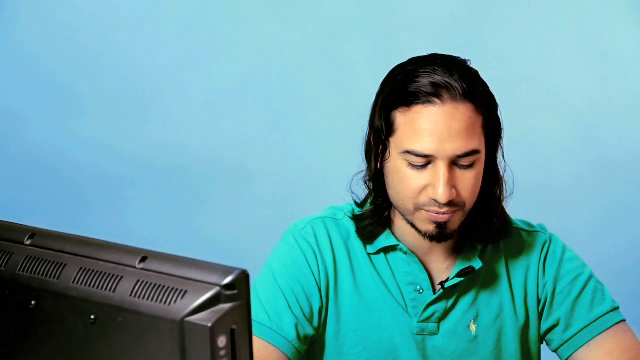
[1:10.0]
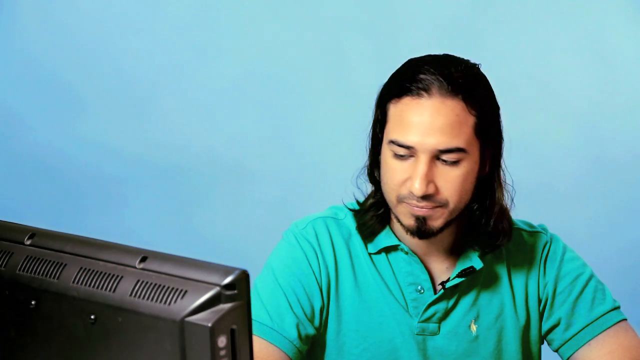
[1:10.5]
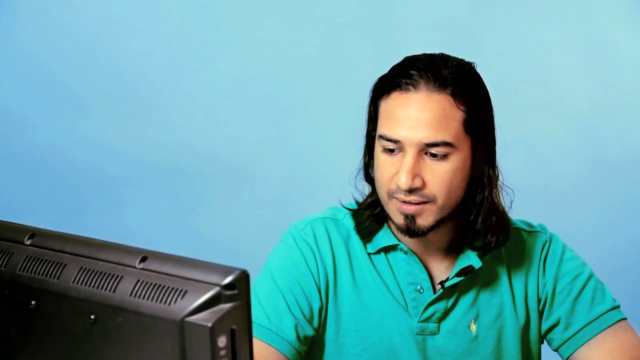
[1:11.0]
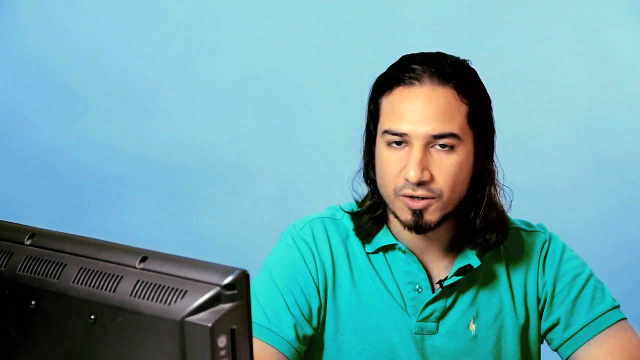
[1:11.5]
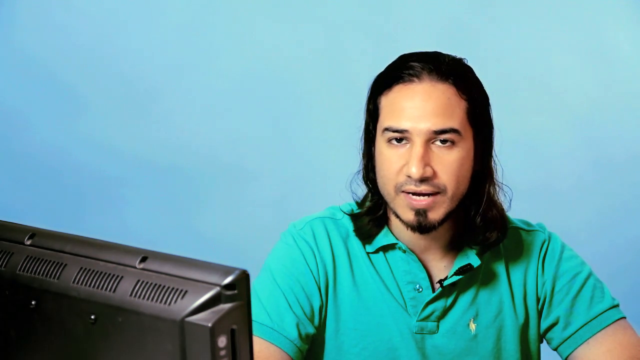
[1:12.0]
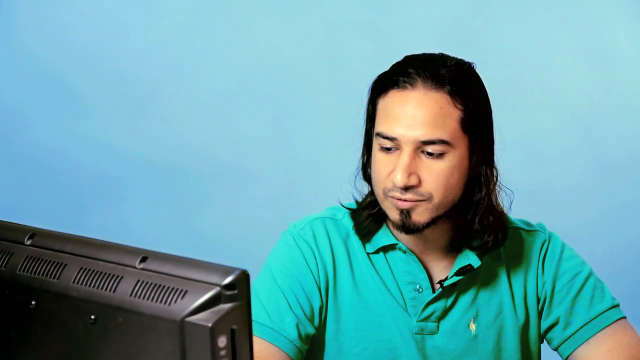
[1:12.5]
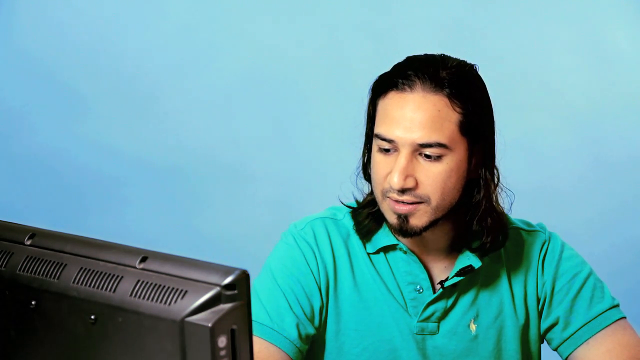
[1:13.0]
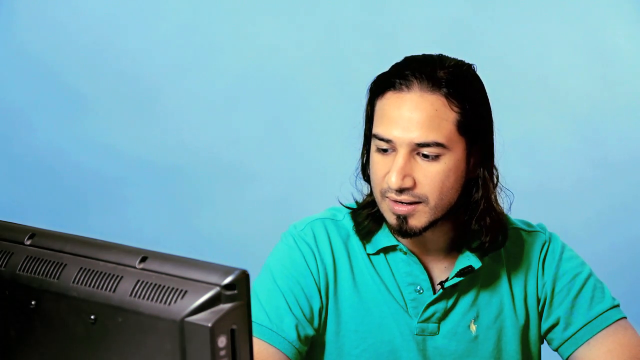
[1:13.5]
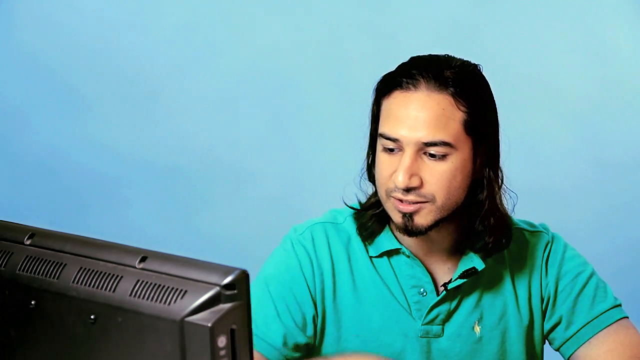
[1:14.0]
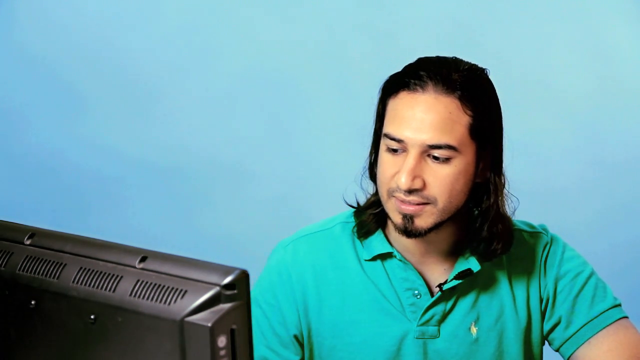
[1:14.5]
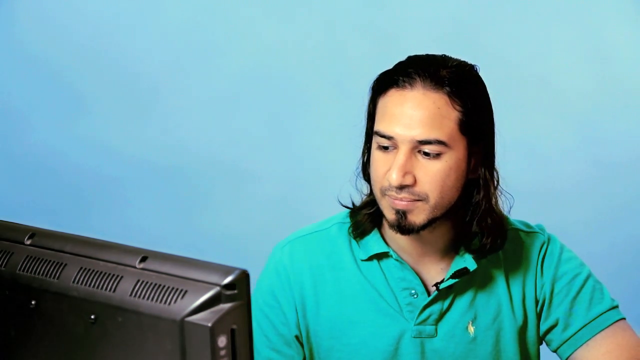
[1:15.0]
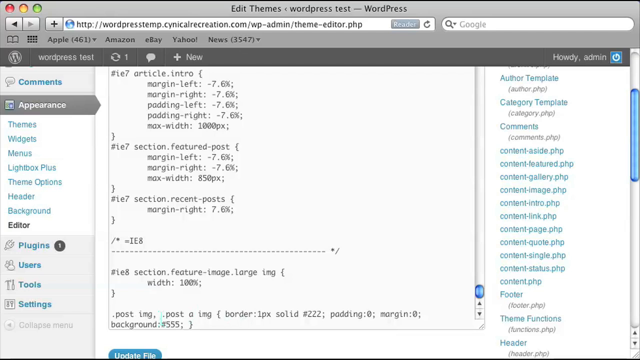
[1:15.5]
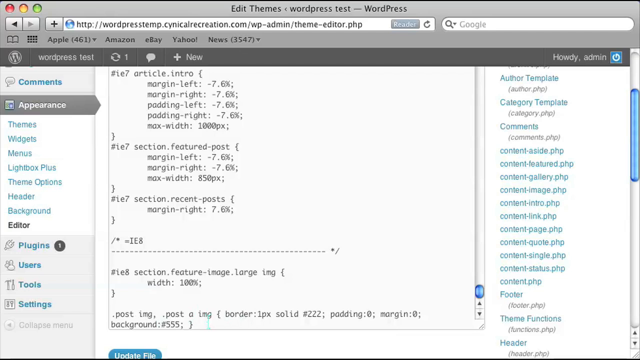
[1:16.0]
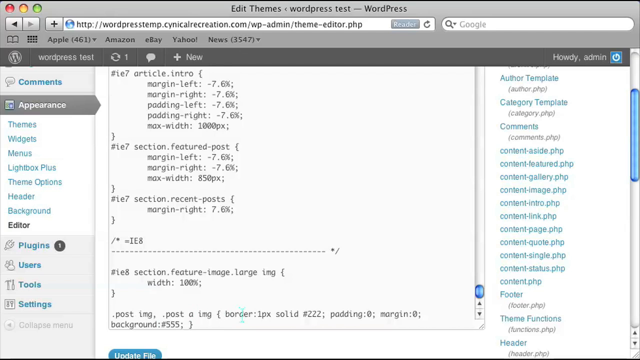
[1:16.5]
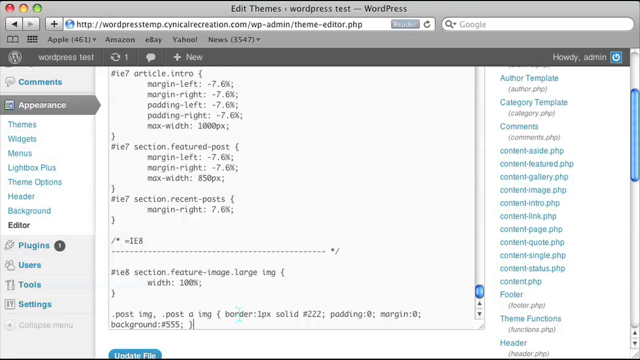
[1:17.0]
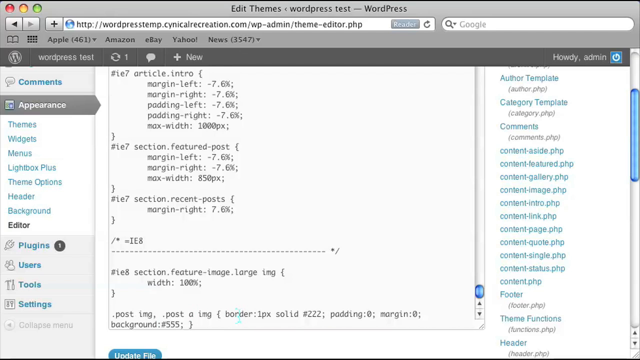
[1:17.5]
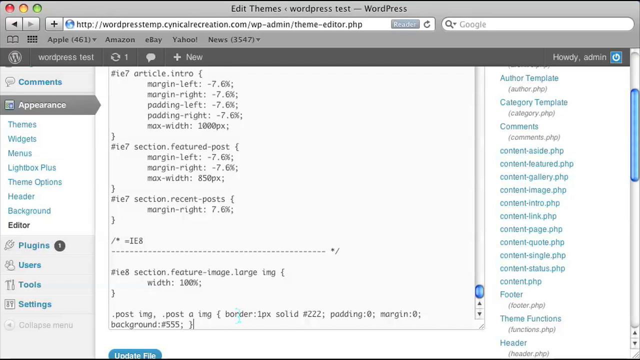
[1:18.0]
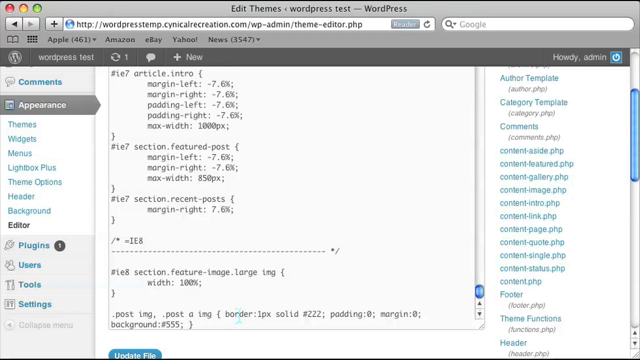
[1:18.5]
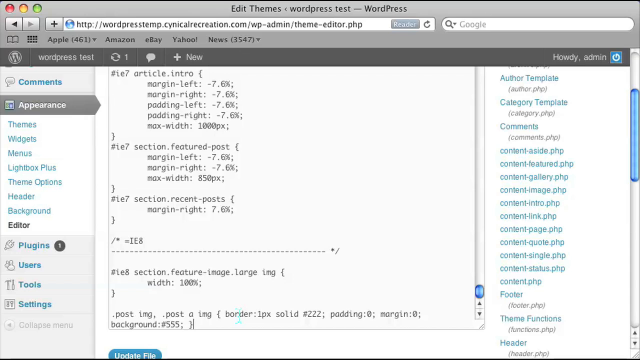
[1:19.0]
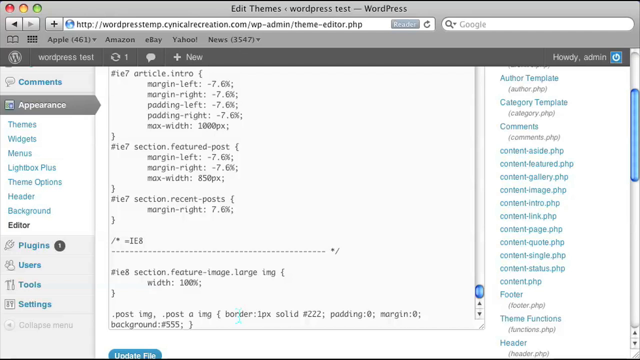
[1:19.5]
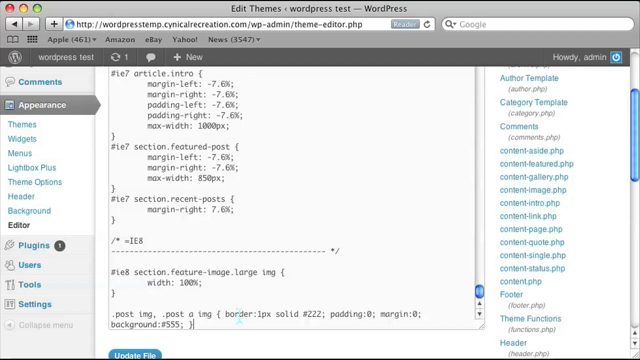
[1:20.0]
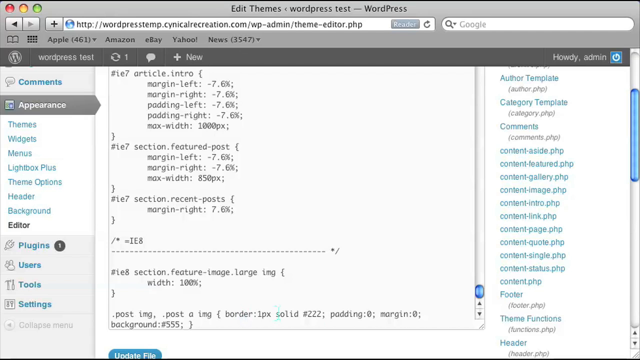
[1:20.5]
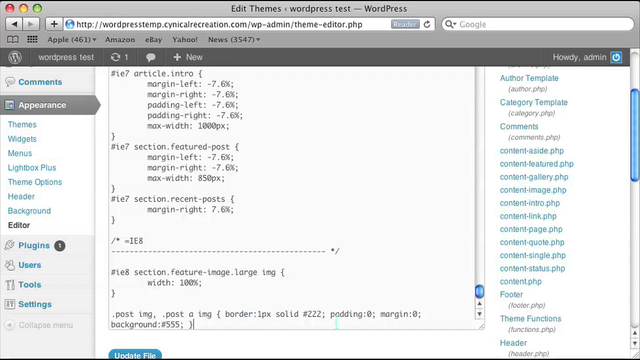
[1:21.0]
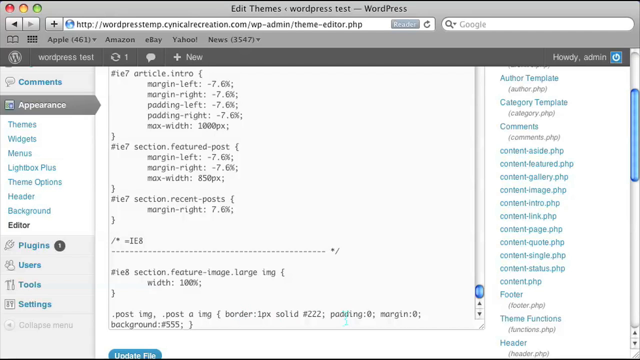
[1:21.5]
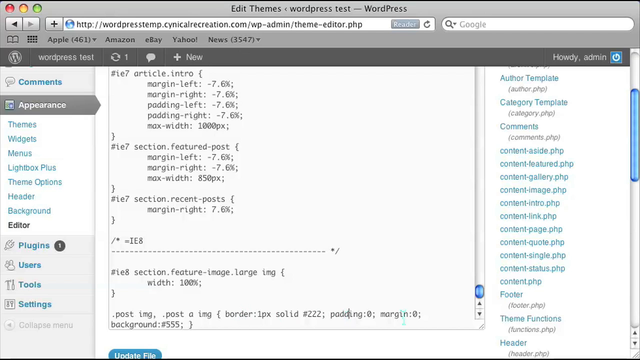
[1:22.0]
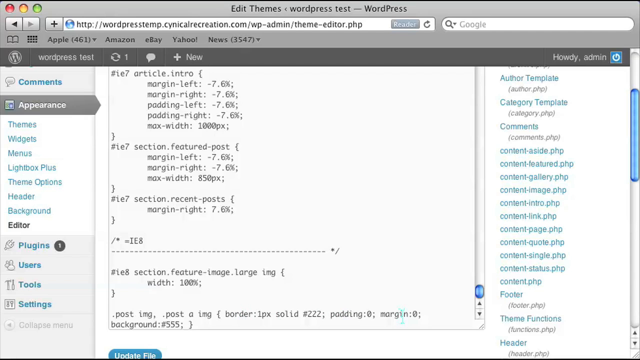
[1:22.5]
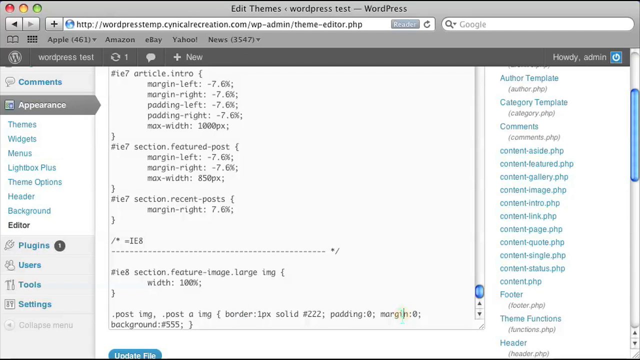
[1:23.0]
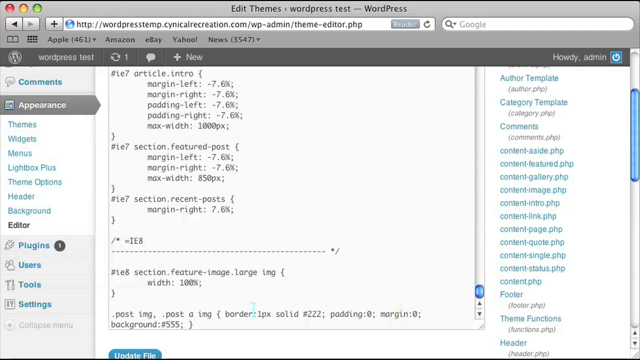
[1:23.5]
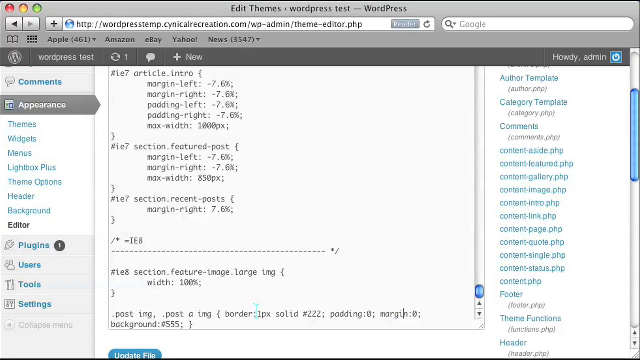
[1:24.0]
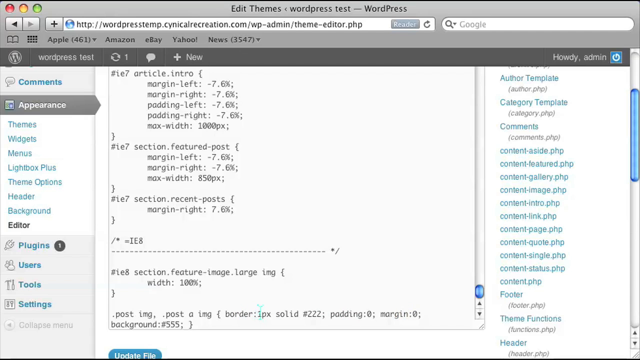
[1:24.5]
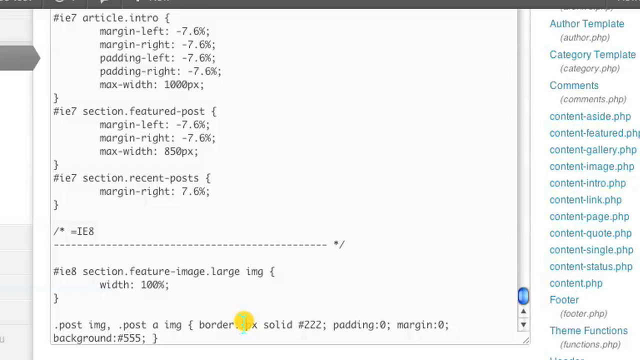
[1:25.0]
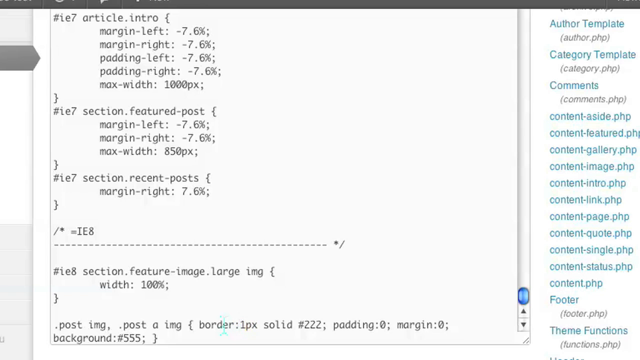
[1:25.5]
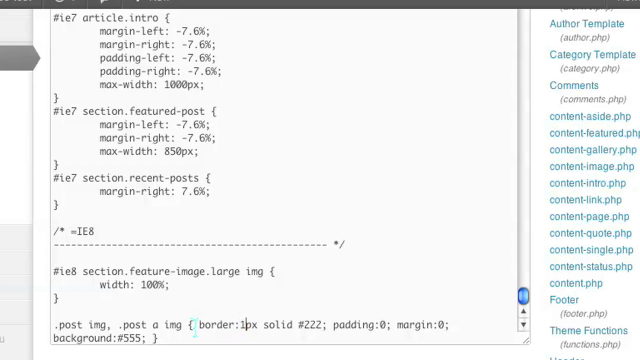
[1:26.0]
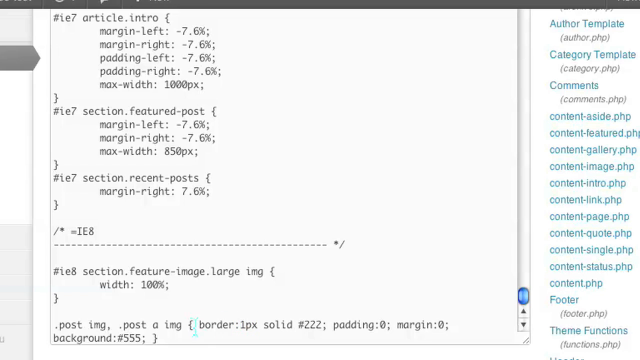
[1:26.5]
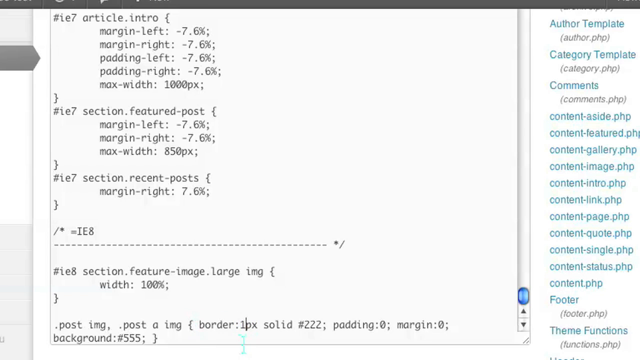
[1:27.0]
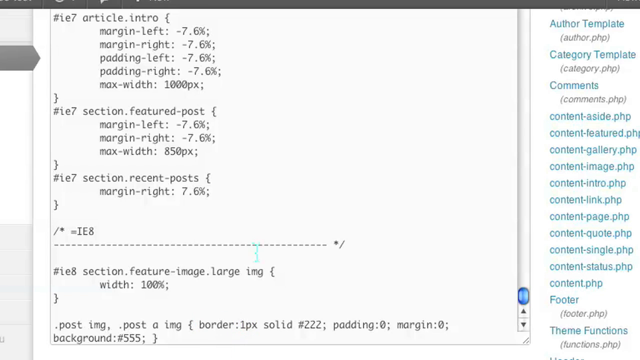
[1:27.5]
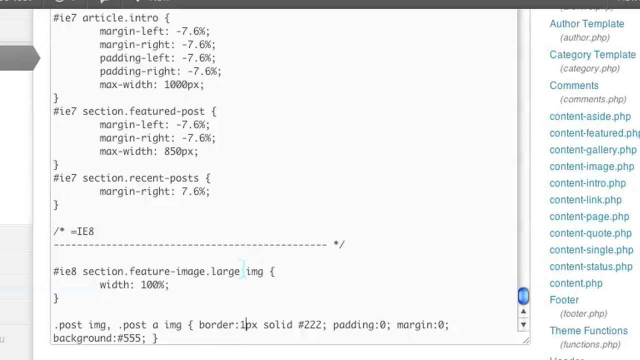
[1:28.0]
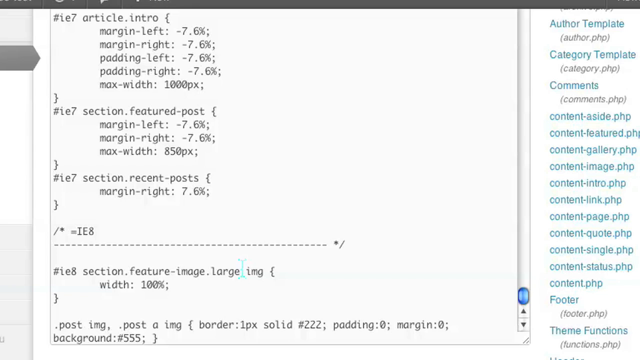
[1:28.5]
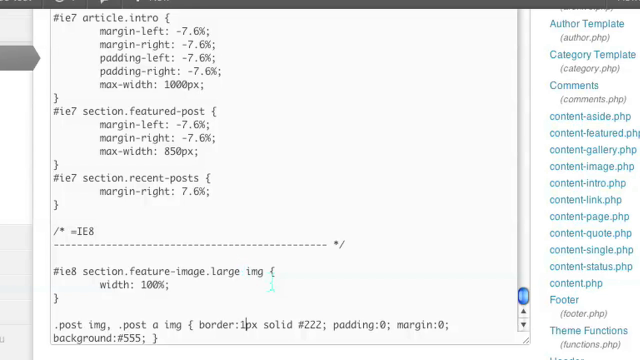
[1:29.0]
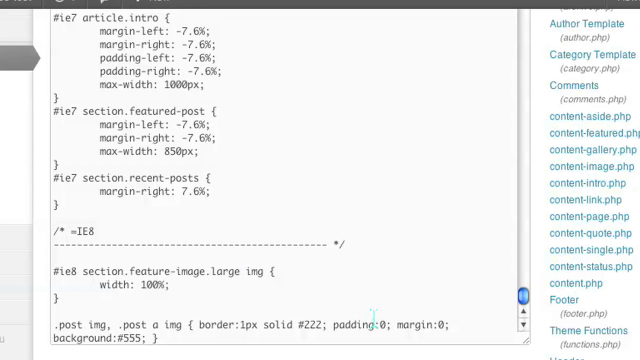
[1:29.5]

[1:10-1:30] Against a blue background, a man sits at the bottom of the screen, slightly offset to the right, facing the camera and looking down. He wears a green shirt with a yellow lightning bolt on his left pectoral, the side of his chest closest to the right of the screen. In the bottom left of the screen is the back of a black computer monitor. The man is talking, and he looks over at the computer monitor, which is over his right shoulder. The view then zooms in on the page on the computer monitor: at the top it says "edit themes.wordpresstest-wordpress", with a lot of information in the middle of the screen. It zooms in on the middle of the screen, where on the right it says "author templates", followed by other items in blue letters going down.